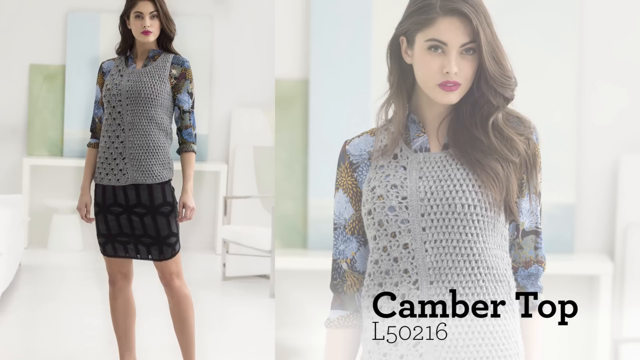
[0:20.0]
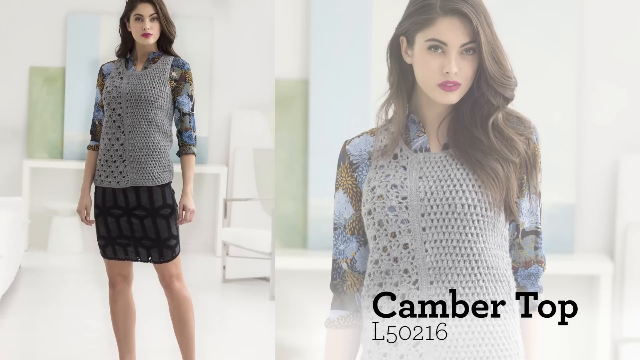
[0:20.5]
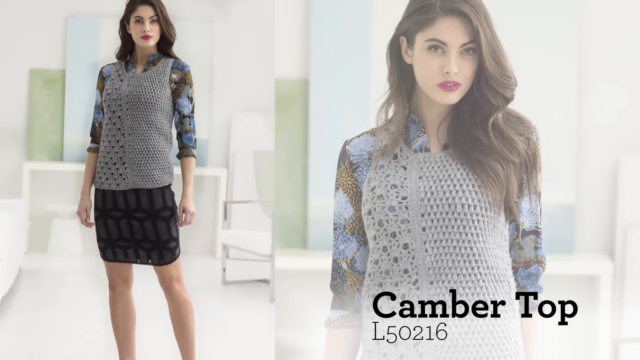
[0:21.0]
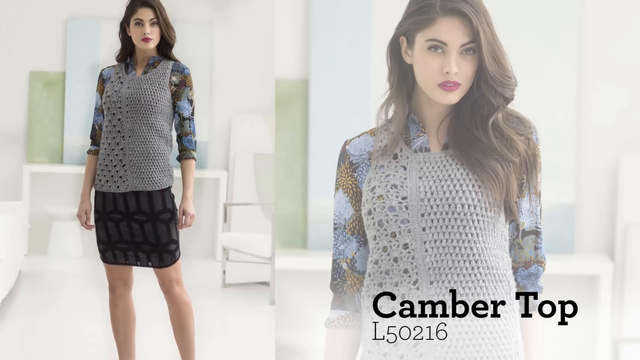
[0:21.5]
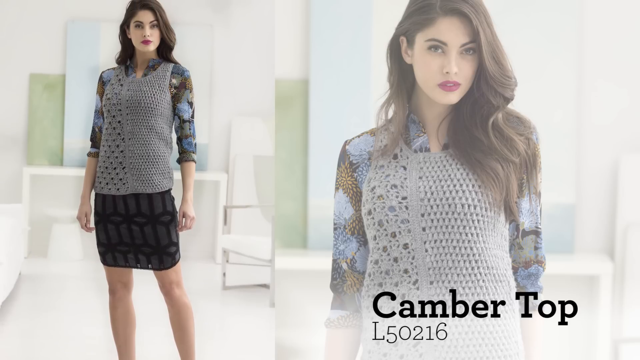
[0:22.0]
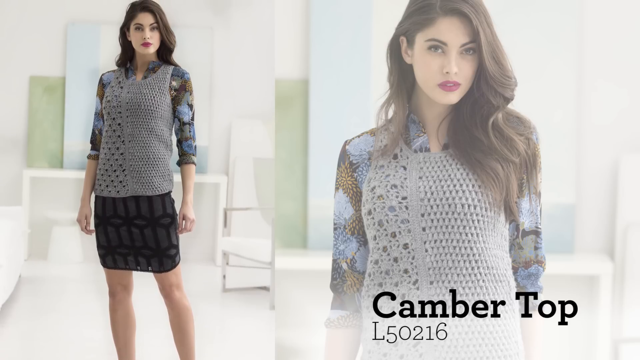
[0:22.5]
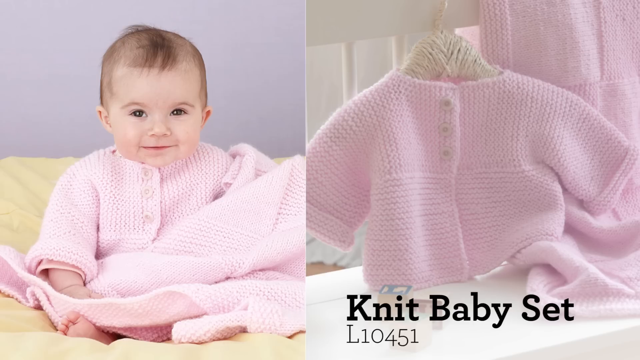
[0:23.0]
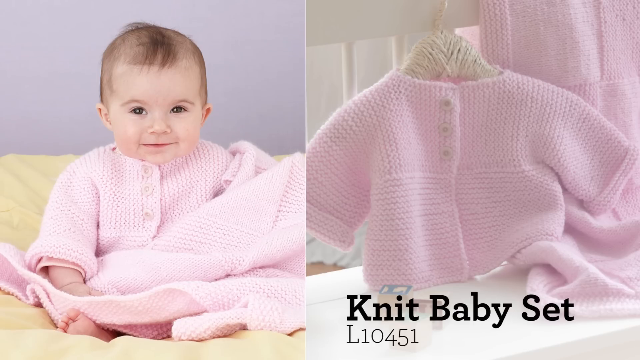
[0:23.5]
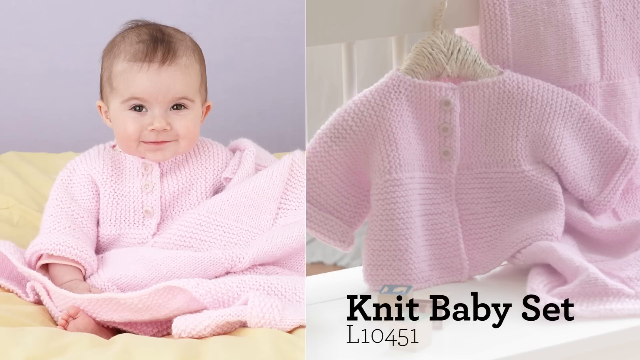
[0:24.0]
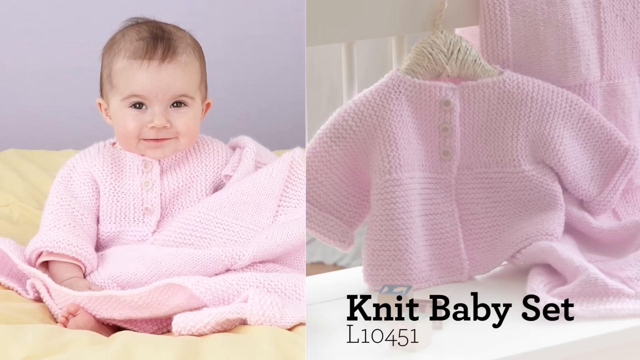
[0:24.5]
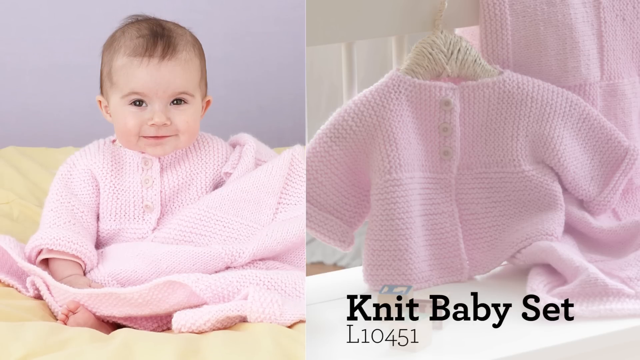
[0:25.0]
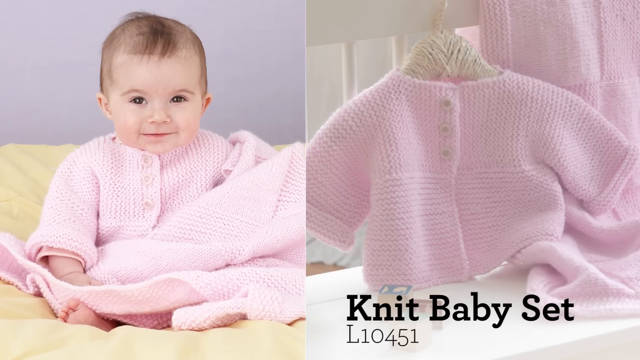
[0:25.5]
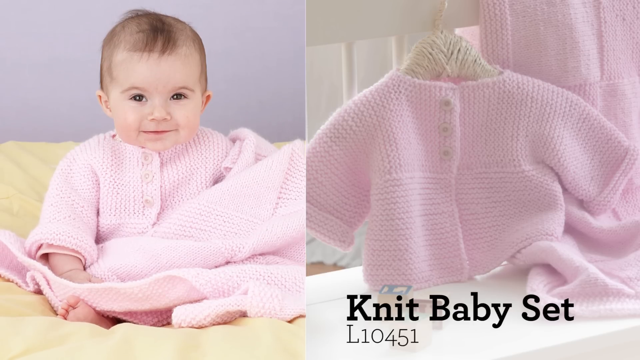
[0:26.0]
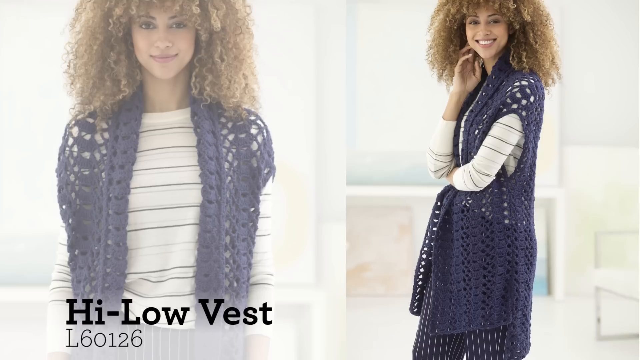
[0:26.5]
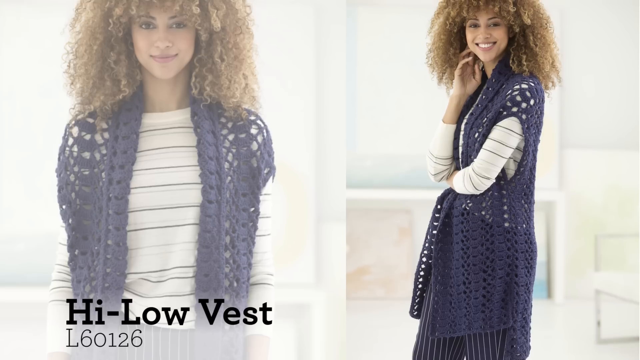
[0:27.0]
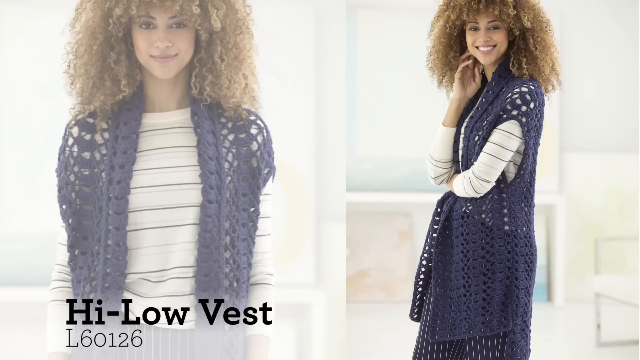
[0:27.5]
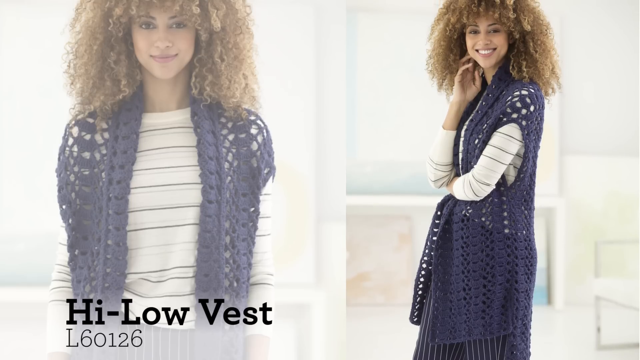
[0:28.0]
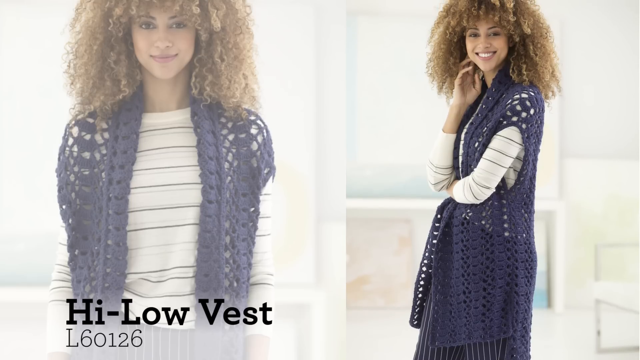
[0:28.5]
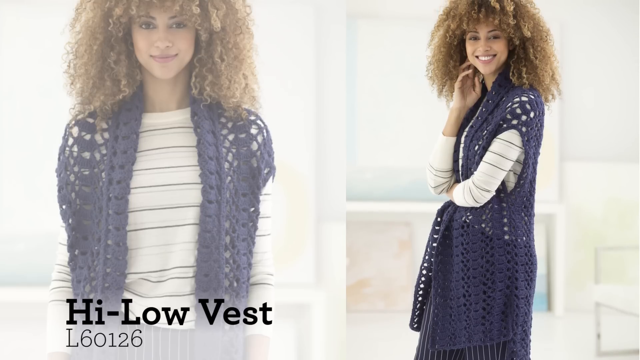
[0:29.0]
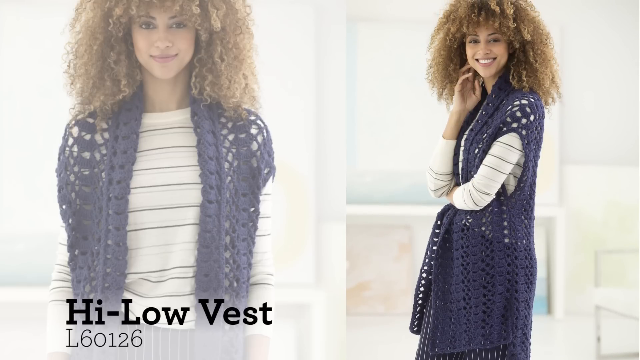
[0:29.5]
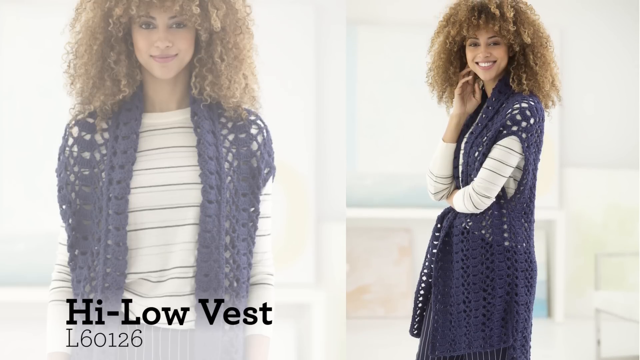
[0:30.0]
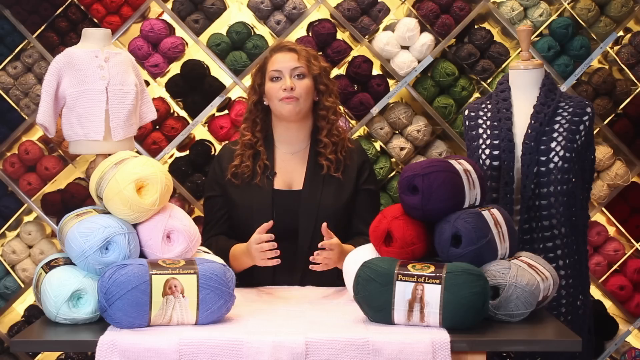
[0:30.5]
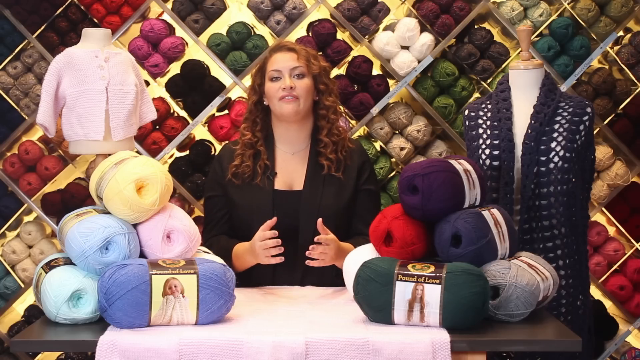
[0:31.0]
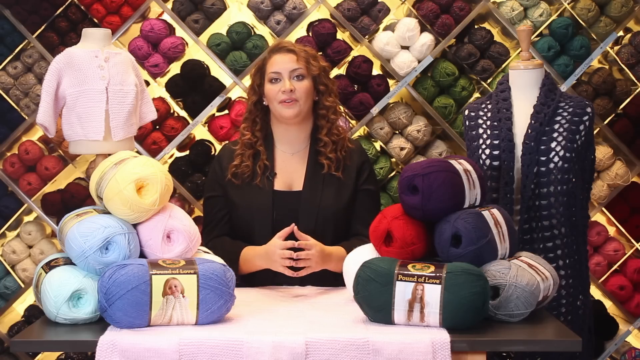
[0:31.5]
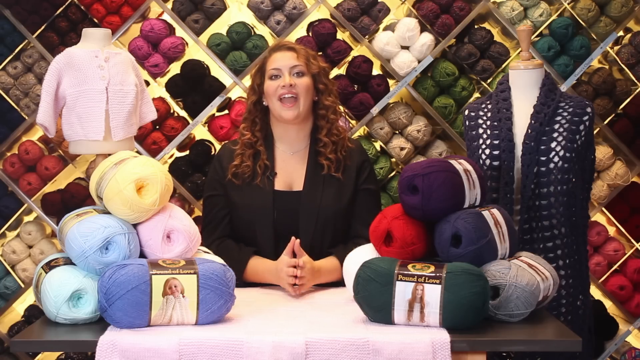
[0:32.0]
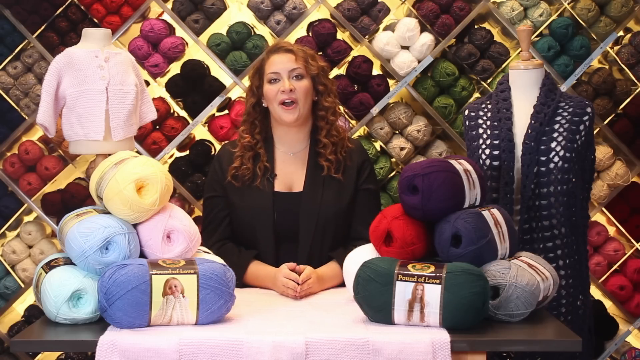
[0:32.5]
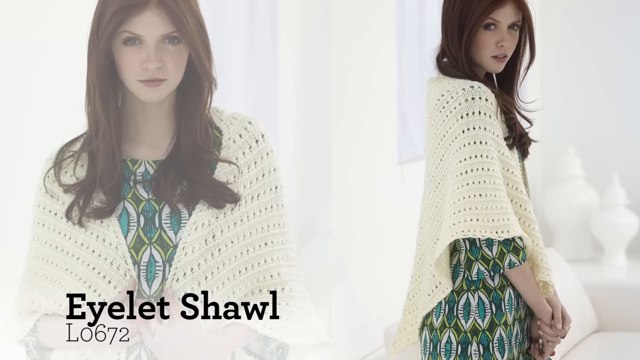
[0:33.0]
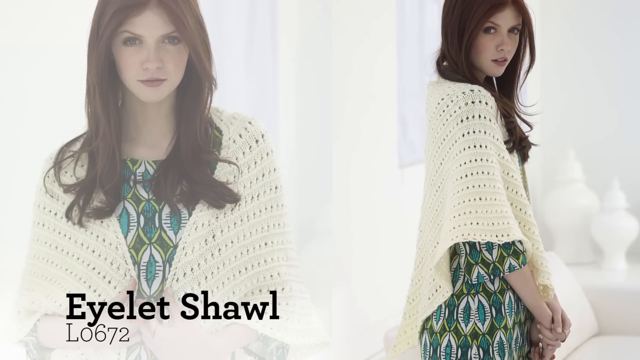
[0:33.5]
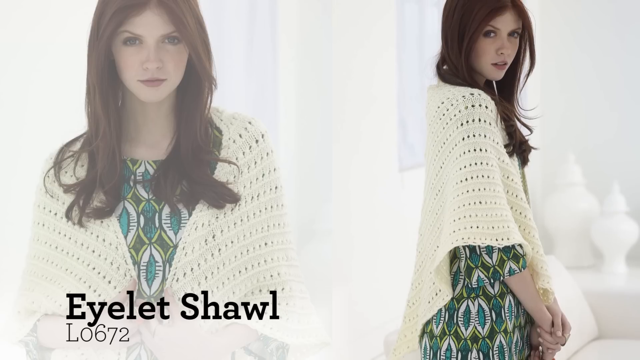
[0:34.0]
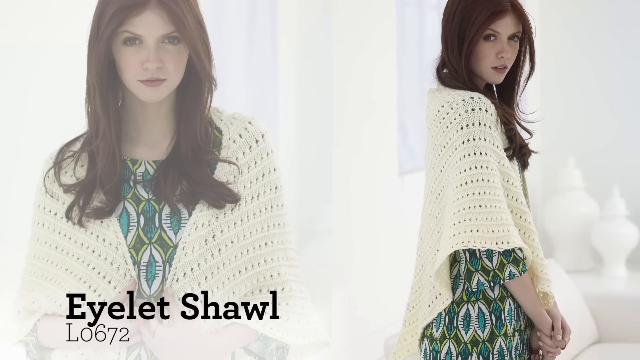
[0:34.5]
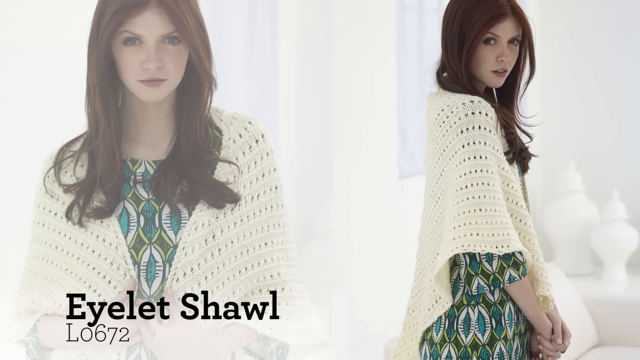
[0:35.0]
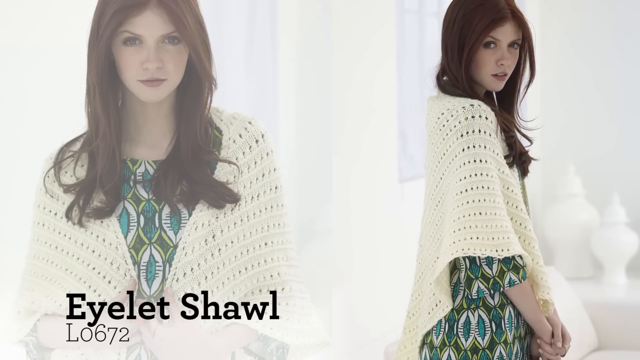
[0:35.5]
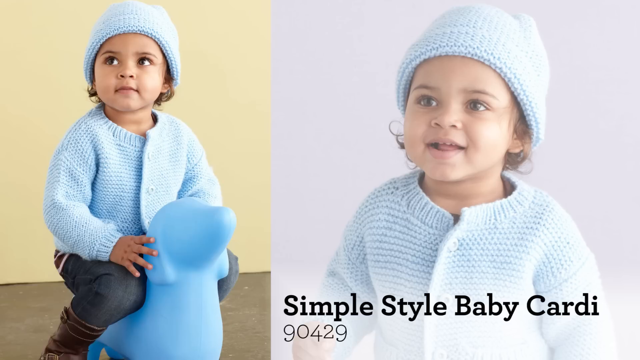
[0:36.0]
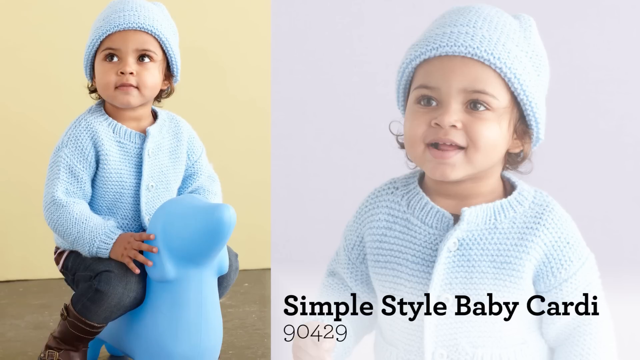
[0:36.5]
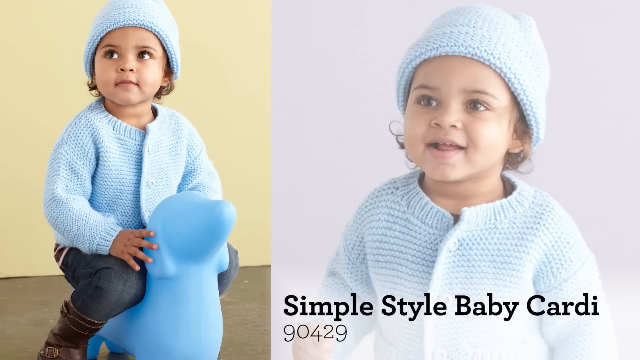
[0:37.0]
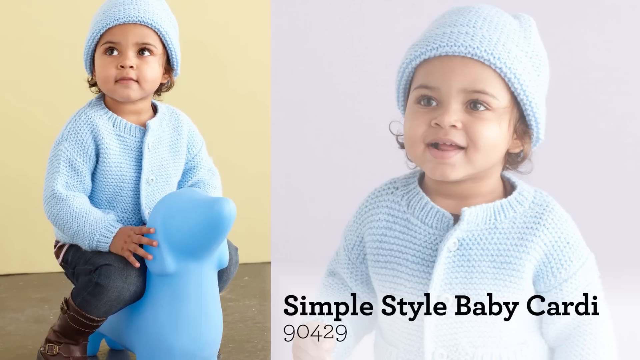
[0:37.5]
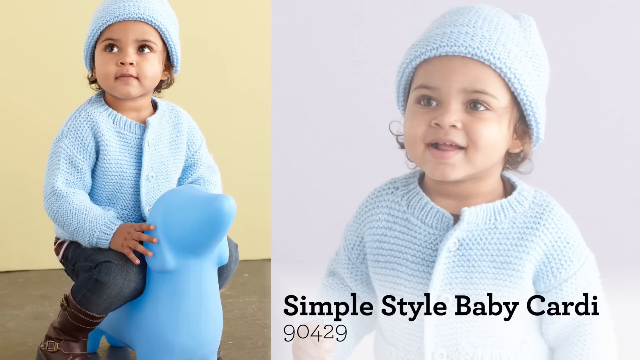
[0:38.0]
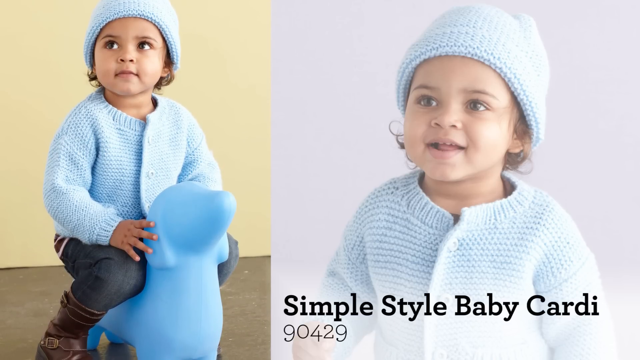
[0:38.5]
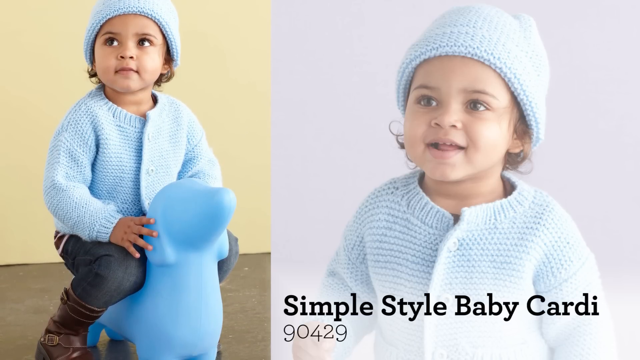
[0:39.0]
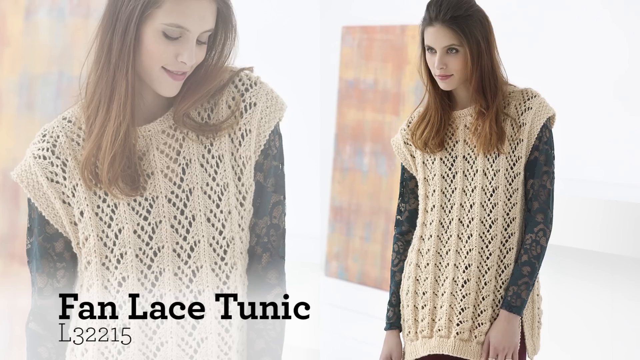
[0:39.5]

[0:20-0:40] Wool is being sold in a shop. The Pound Love wool is used in different colours to make items such as dream baby lace throwers, a chamber top, a tunic dress and a knit baby set, which is shown on screen in pink. There is also a low vest in purple. Patterns and colours are shown, along with clothes for adults and kids and throwers made of wool.